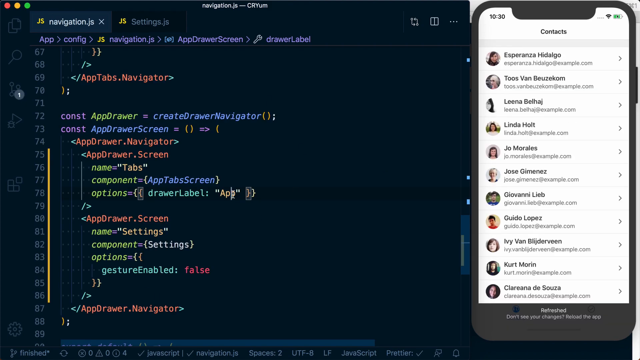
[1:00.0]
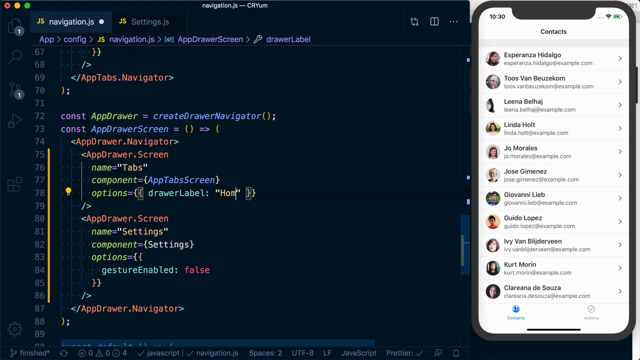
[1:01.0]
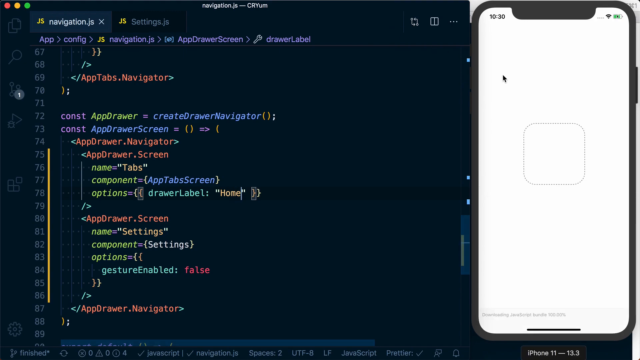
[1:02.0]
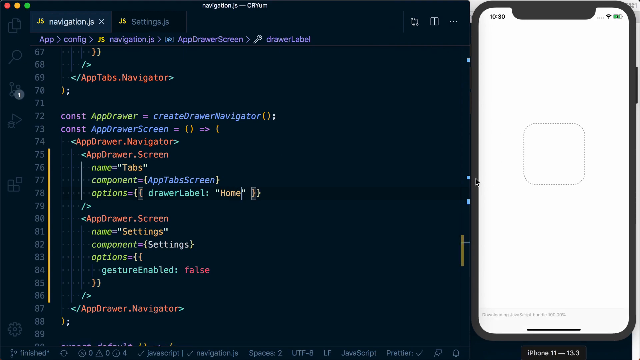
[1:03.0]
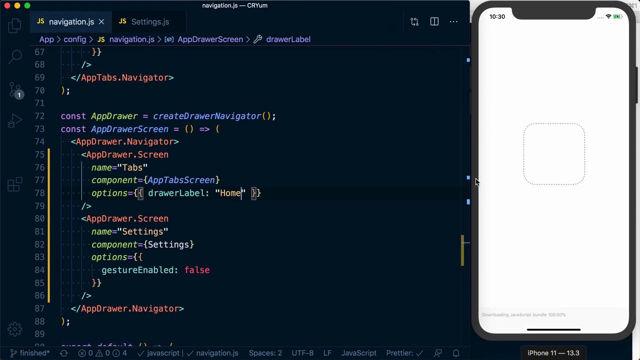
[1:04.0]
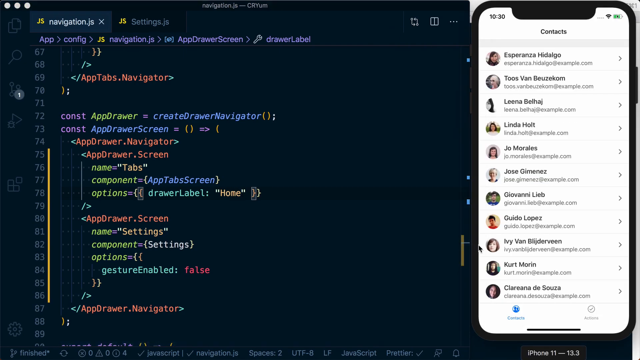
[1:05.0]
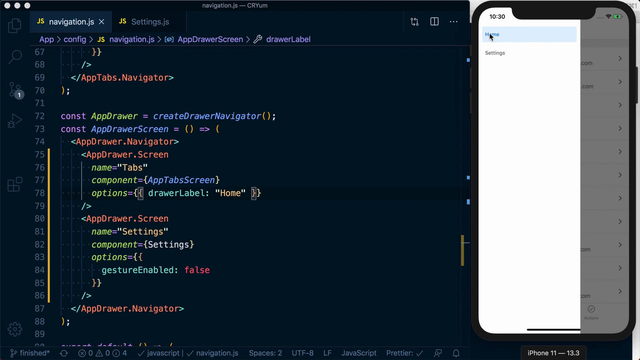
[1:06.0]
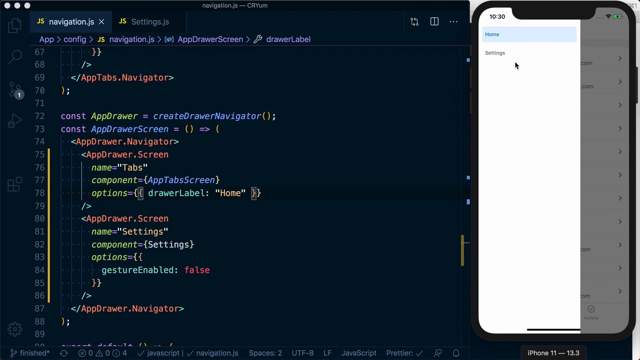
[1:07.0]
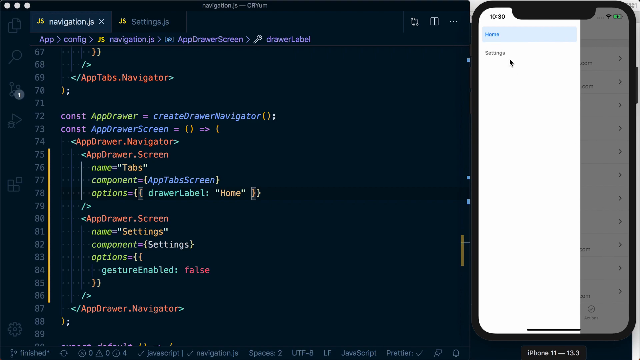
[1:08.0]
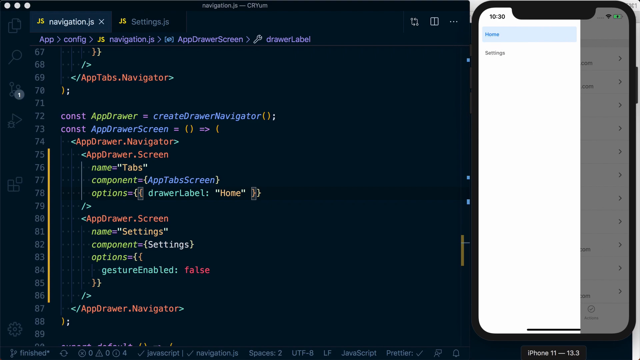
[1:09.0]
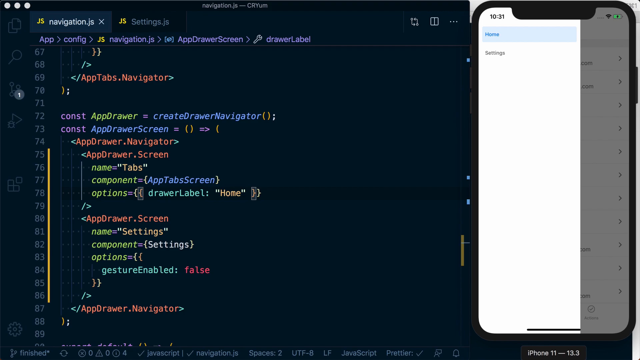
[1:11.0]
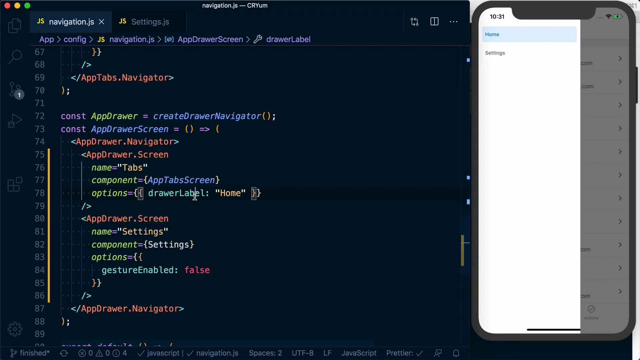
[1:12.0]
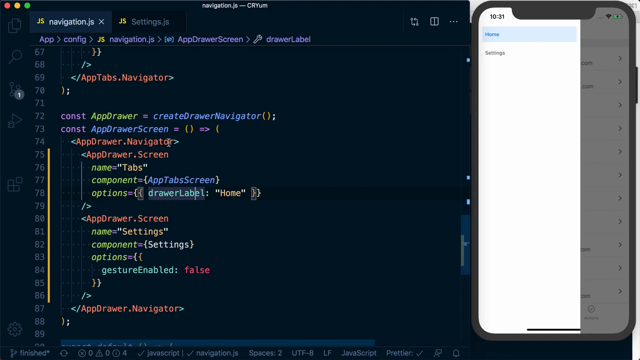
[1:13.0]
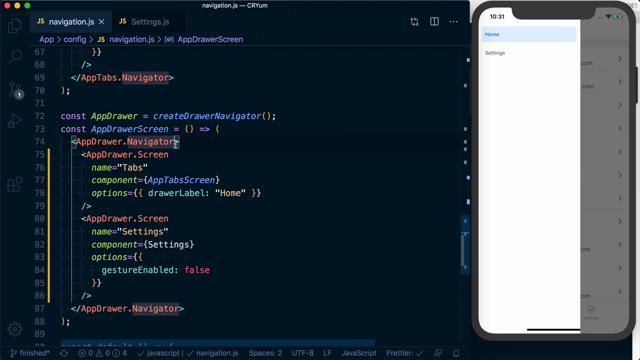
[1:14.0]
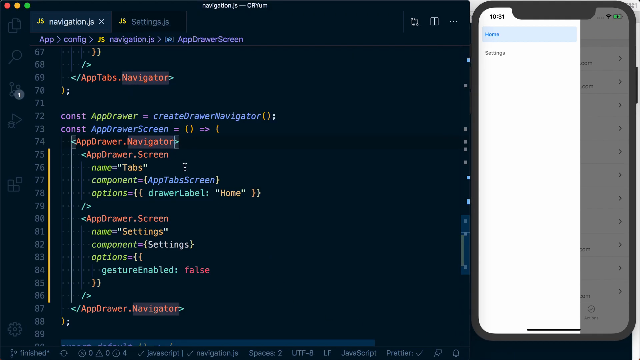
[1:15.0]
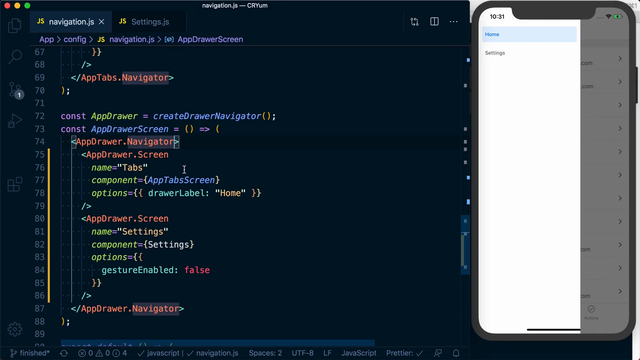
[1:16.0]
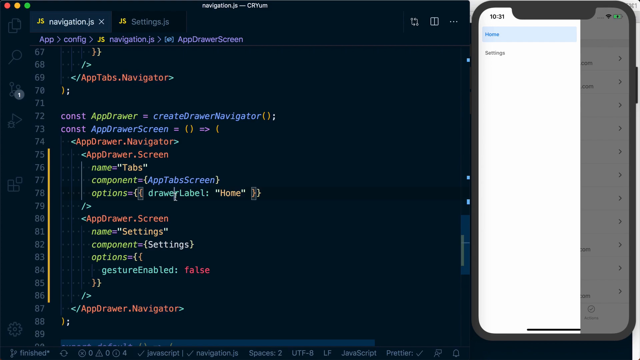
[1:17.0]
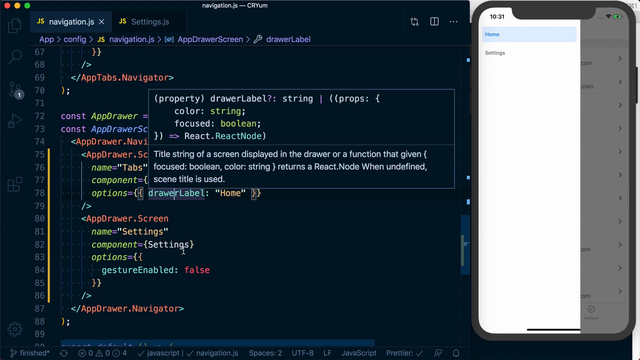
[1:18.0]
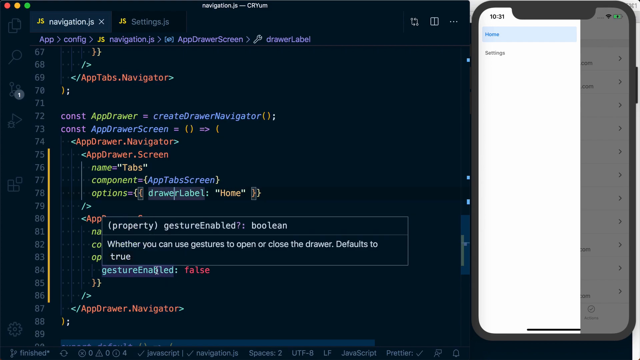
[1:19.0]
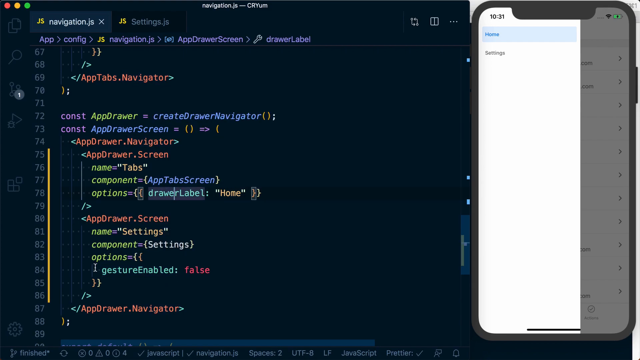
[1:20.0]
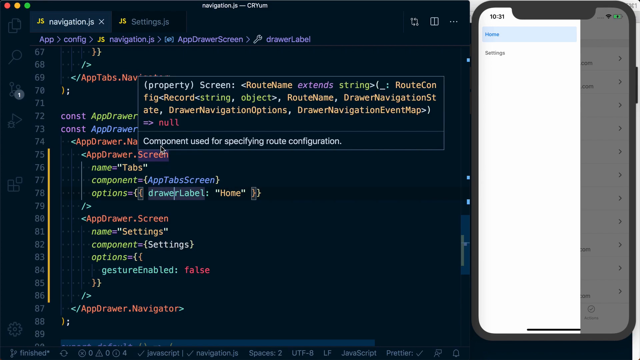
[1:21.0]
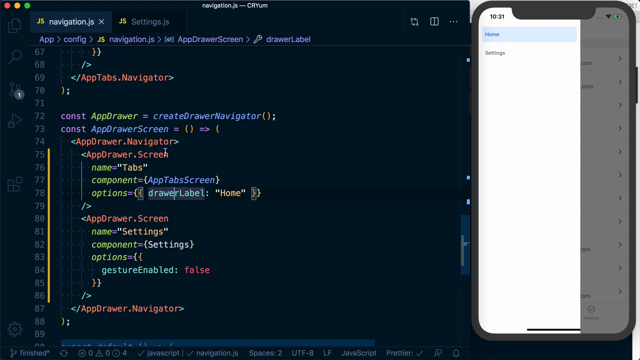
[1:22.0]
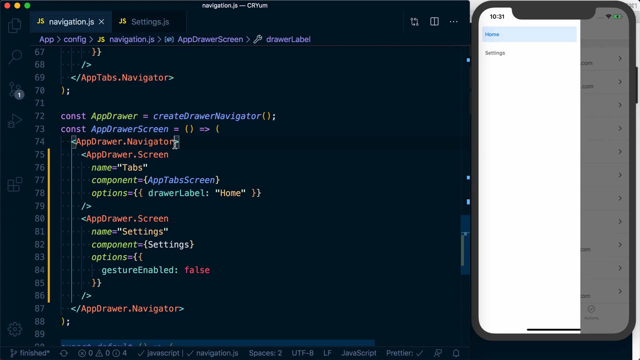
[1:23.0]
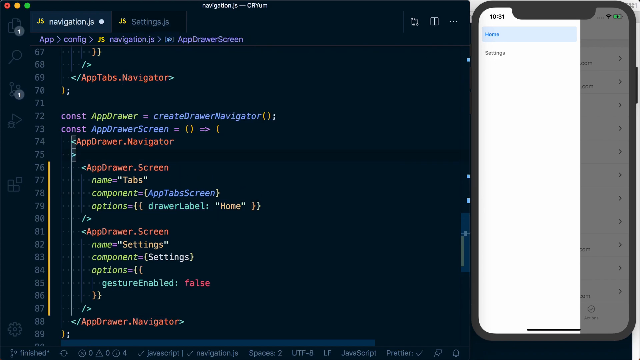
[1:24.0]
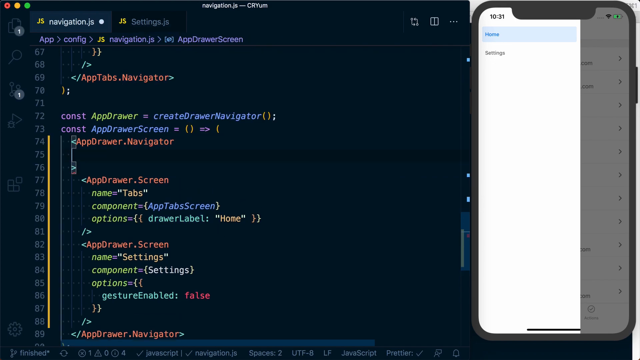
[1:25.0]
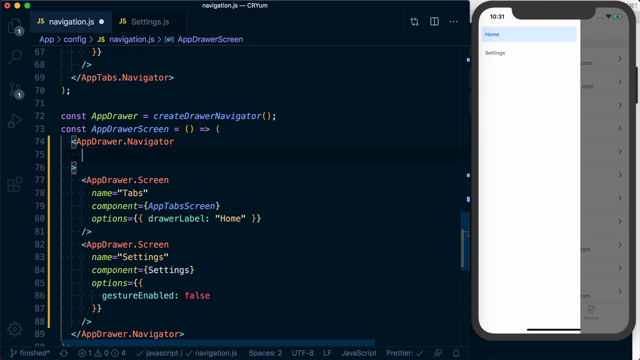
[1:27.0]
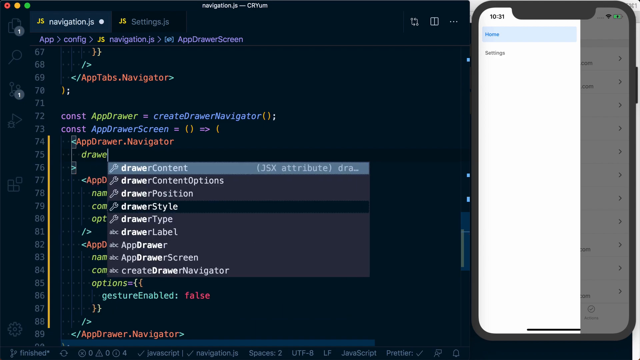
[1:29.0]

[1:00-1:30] Somebody is coding on a computer with a black screen, the code on the left starting at line 67 and going down into the 80s at the bottom, in purple, orange, lime green and blue. On the right-hand side is superimposed what looks like their phone, on a white contacts page. The cursor goes over to the phone, pulls up home and settings, and clicks. The person then goes back to the code and types, highlighting drawer label, then gesture enable, then going back to screen and navigator; each time a pop-up appears. They then type drawer type, and the contacts come up again on the phone. The pop-ups keep appearing, but the person does not really click on them; they seem to be a shortcut for coding faster.